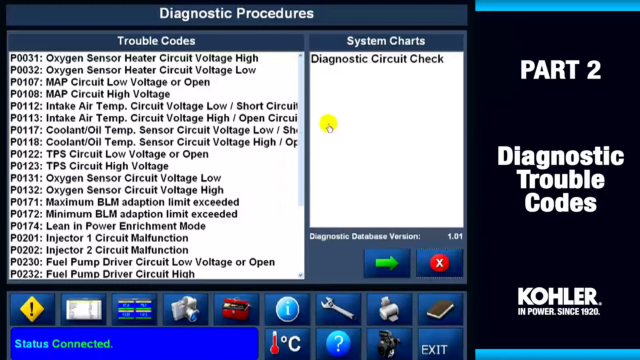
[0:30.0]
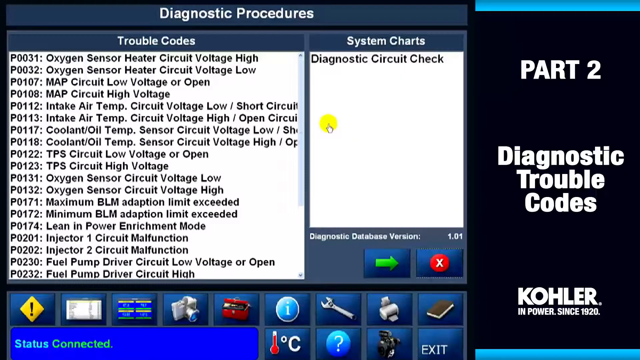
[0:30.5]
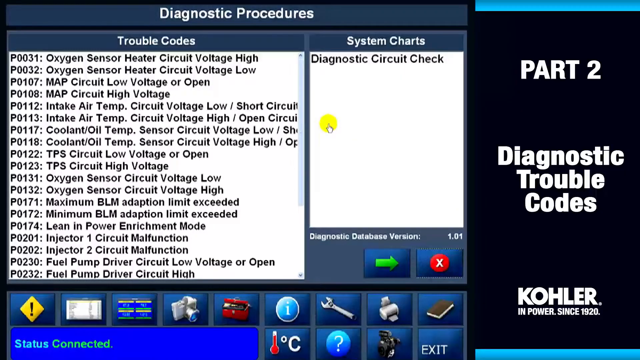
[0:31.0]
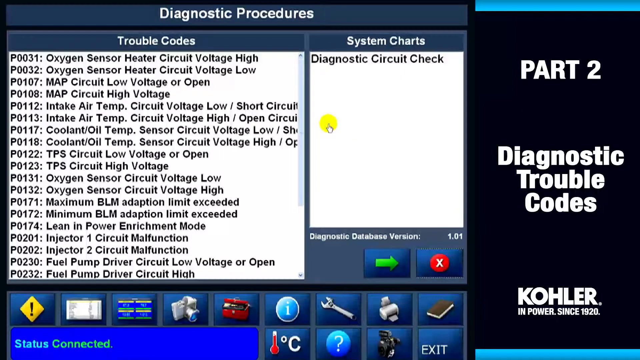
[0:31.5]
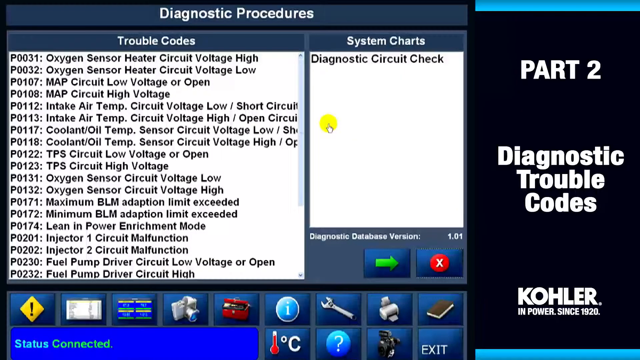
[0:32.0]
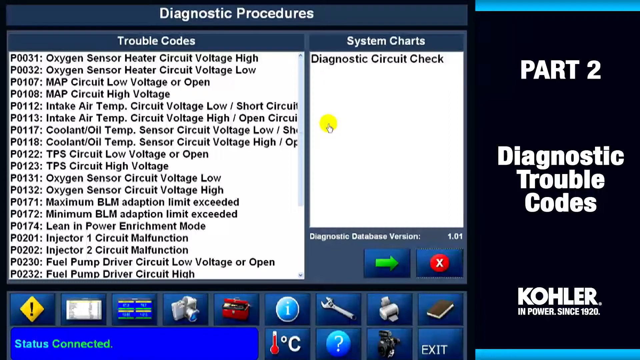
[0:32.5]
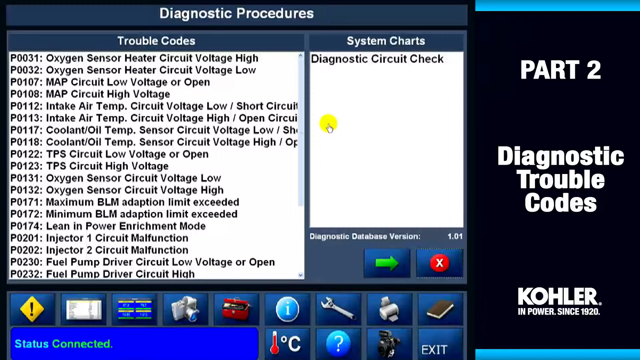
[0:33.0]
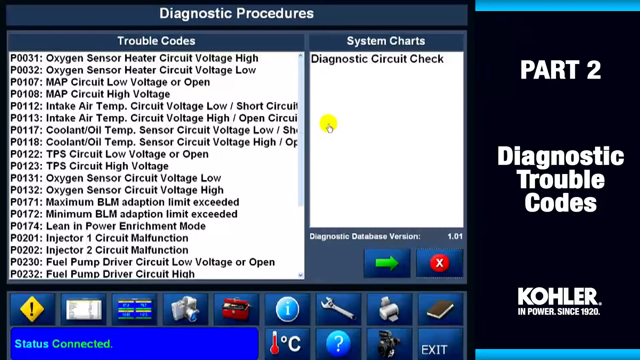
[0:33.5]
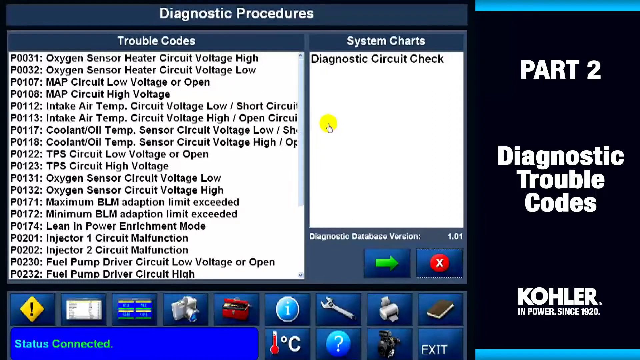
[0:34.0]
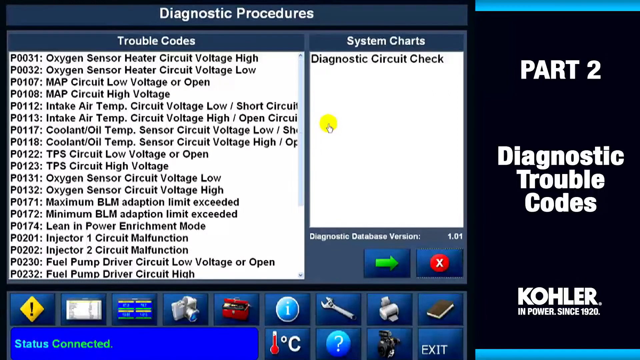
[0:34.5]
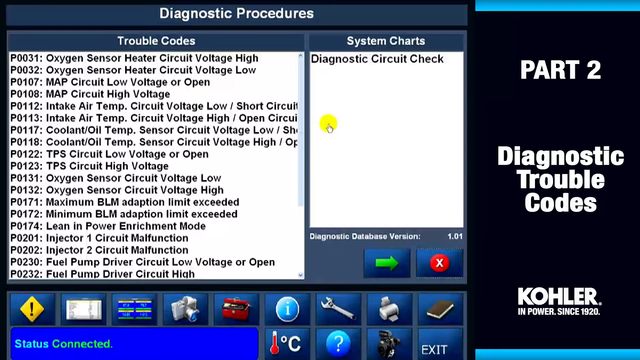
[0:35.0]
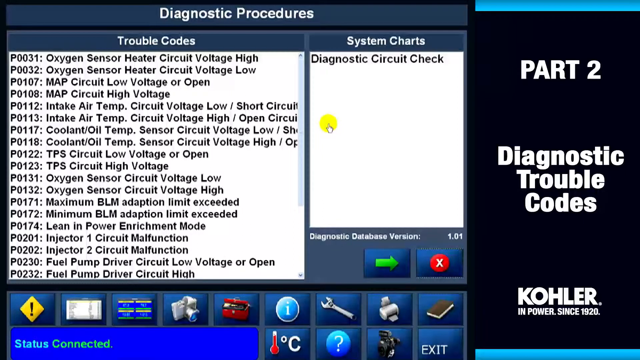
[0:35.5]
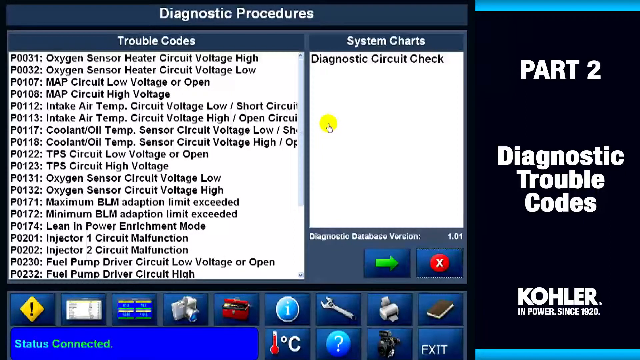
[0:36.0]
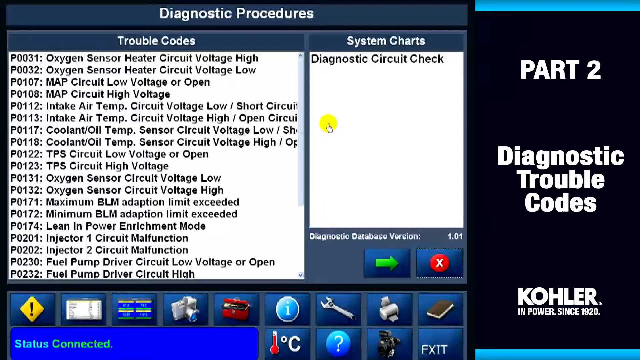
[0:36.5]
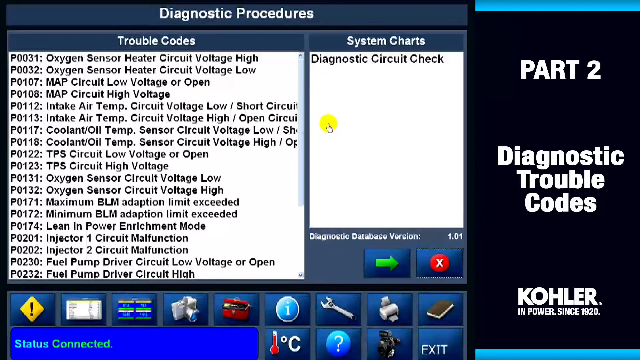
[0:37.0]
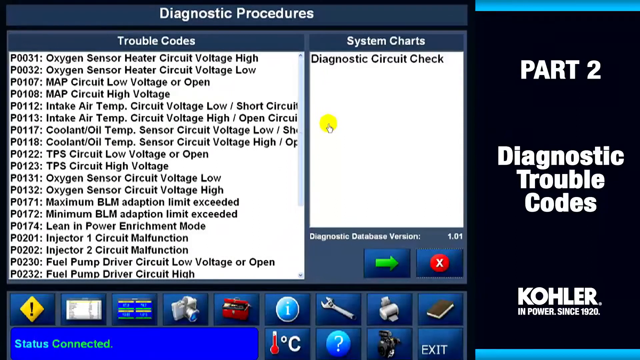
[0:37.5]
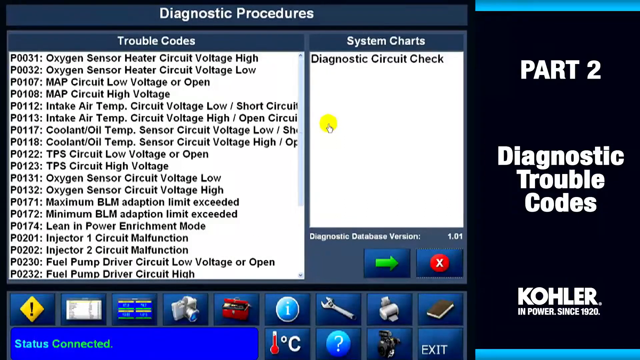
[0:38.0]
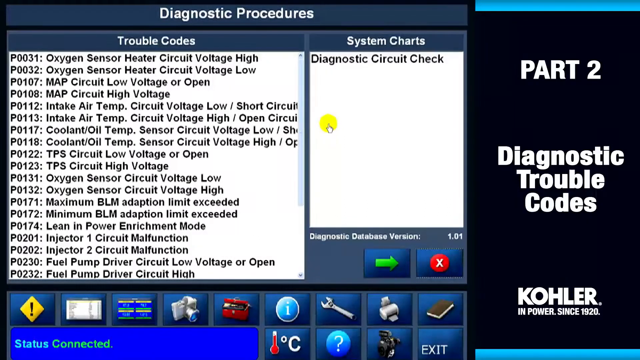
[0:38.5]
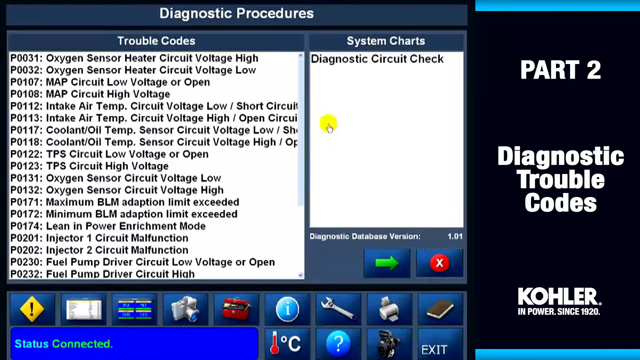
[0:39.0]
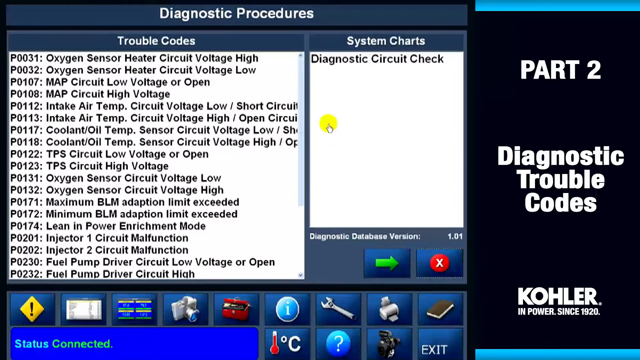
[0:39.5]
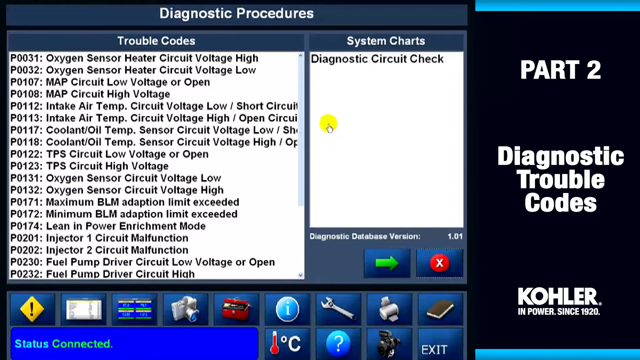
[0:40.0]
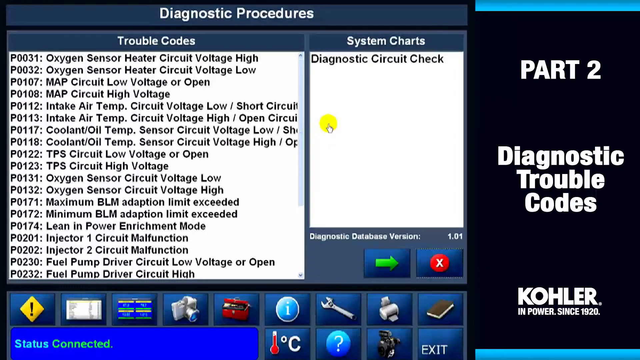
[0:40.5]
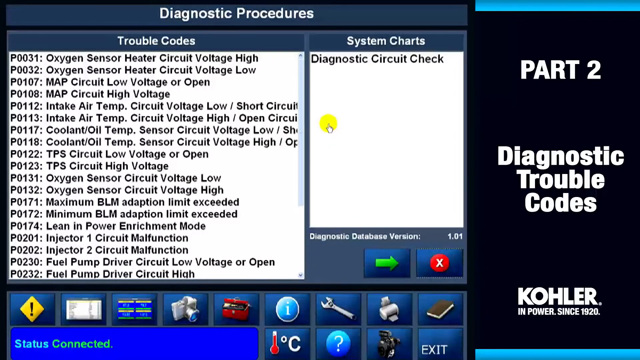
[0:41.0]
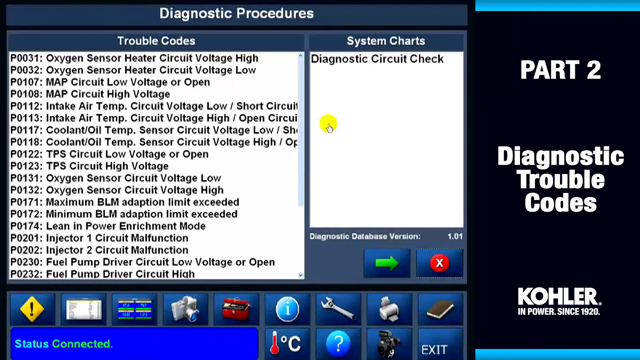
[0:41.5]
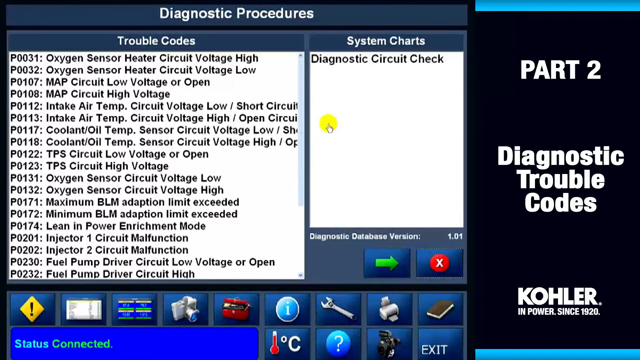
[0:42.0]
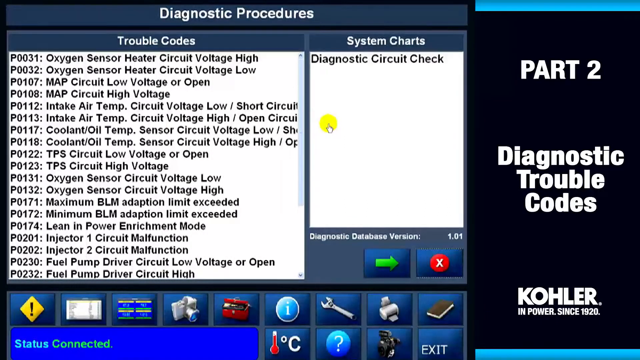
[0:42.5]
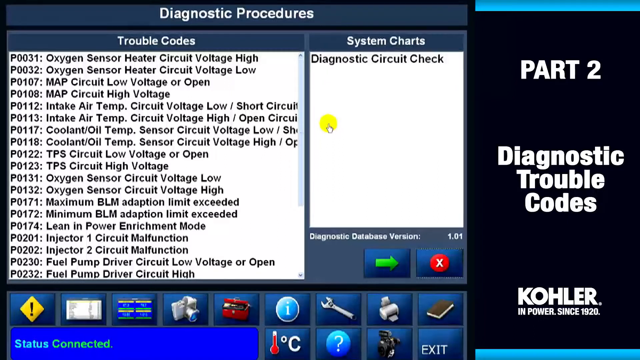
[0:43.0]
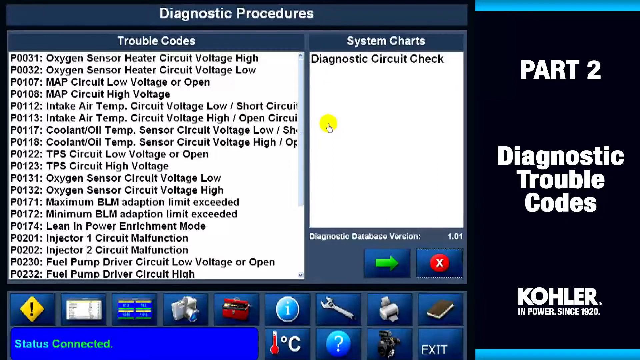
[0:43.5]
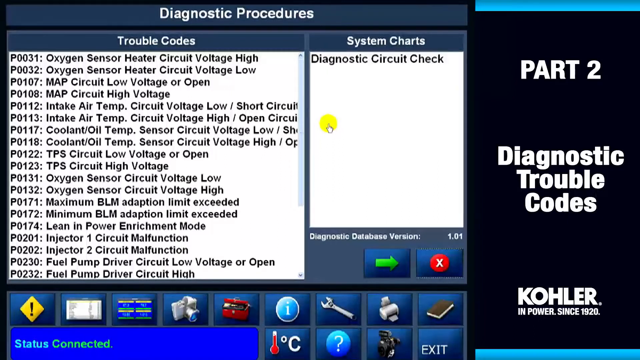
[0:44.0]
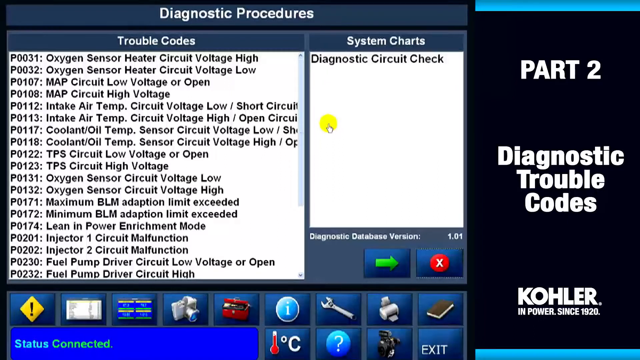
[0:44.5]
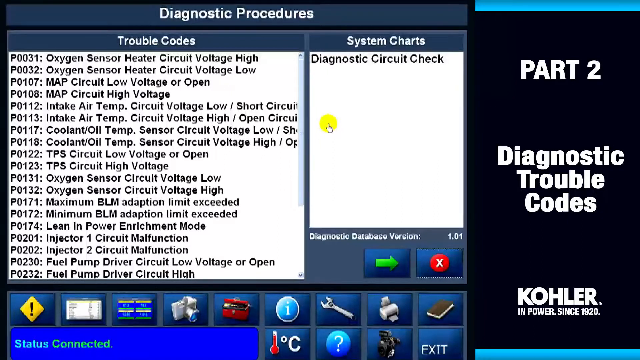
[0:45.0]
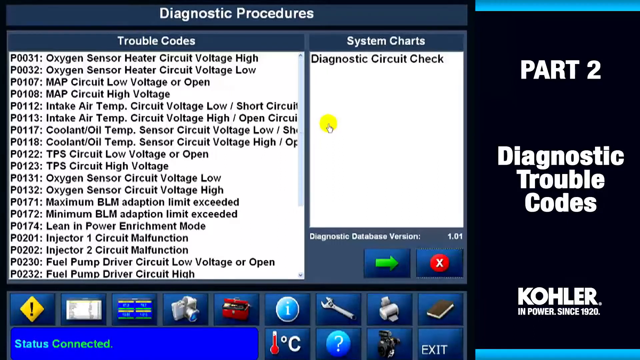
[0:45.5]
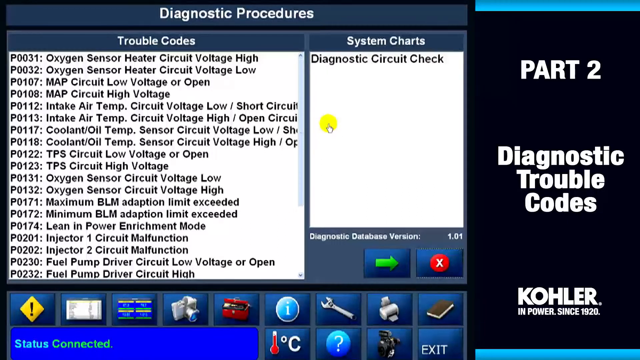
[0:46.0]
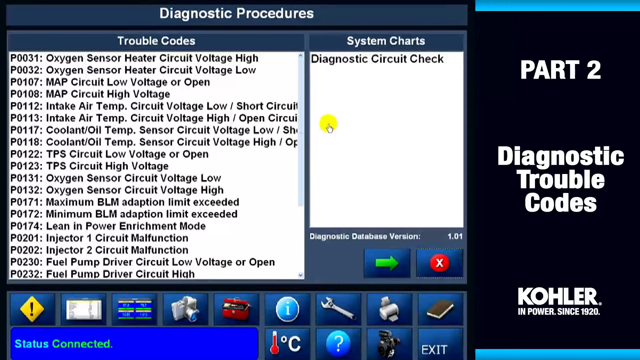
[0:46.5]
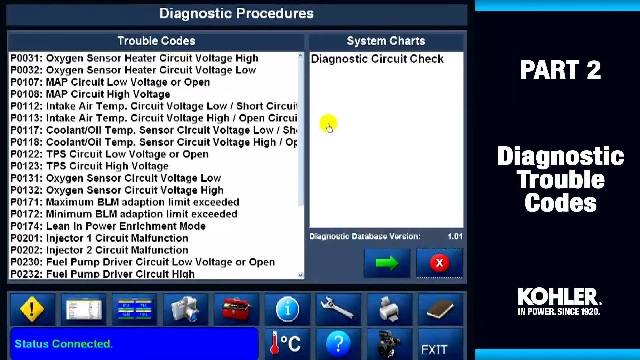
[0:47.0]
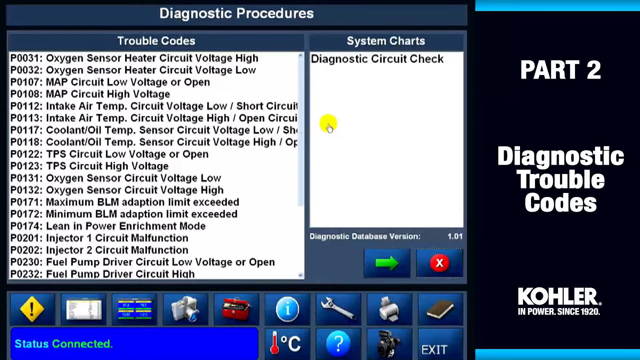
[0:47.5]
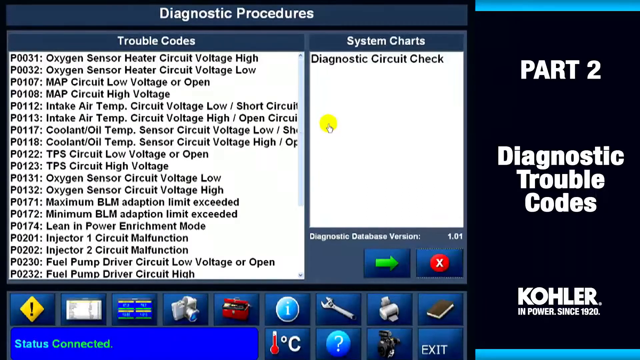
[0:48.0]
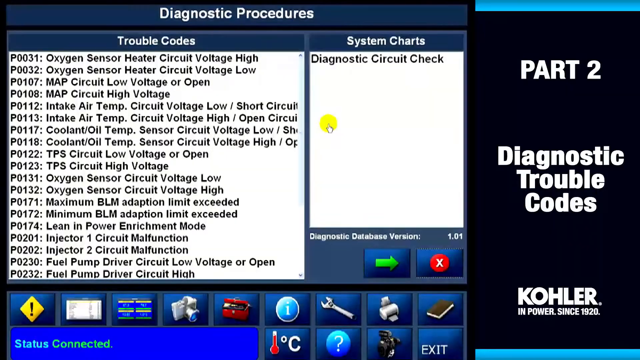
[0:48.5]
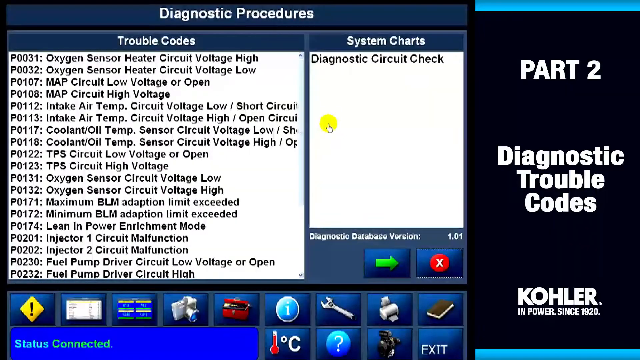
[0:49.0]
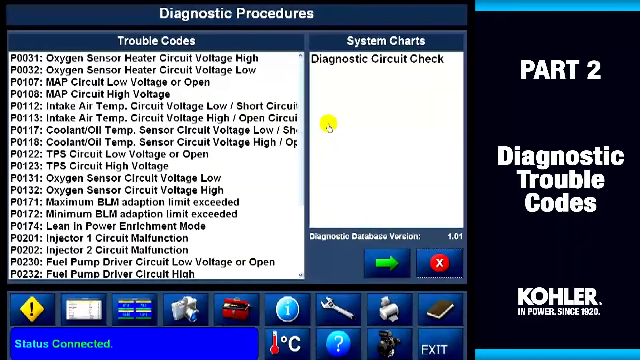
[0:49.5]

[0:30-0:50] A screen reads "Diagnostic Procedures", "Trouble Codes" and "System Charts". Under "Trouble Codes" is a list of about 20 codes, including "P0031 Oxygen Sensor Heater Circuit Voltage High", "P0032 Oxygen Sensor Heater Circuit Voltage Low", "P0107 MAP Circuit Low Voltage or Open" and "P0108 MAP Circuit High Voltage". Other entries cover intake air temp issues, coolant issues, TPS circuit issues, lean and power enrichment mode, injector 1 and injector 2 circuit malfunction, fuel pump driver circuit low voltage or open, and fuel pump driver circuit high.